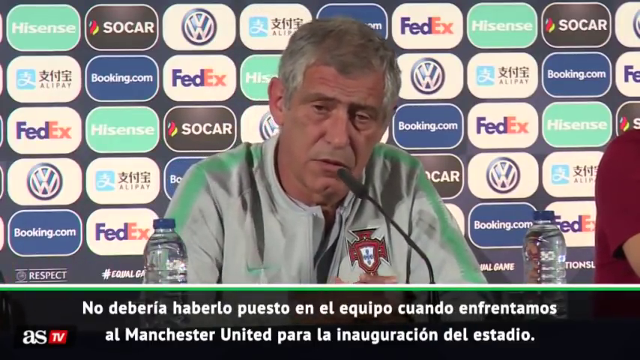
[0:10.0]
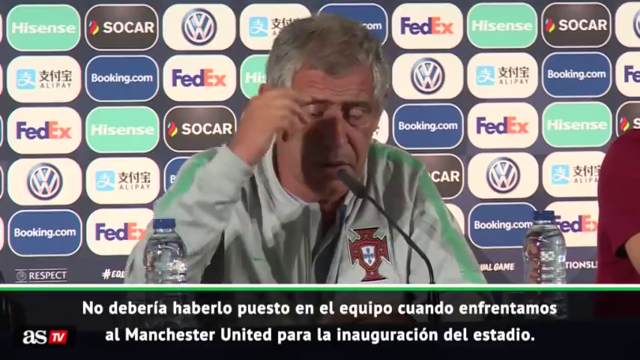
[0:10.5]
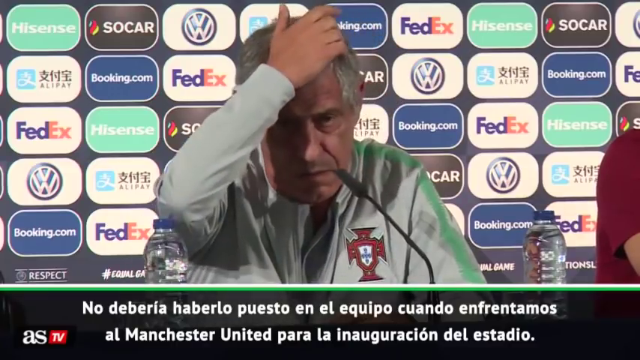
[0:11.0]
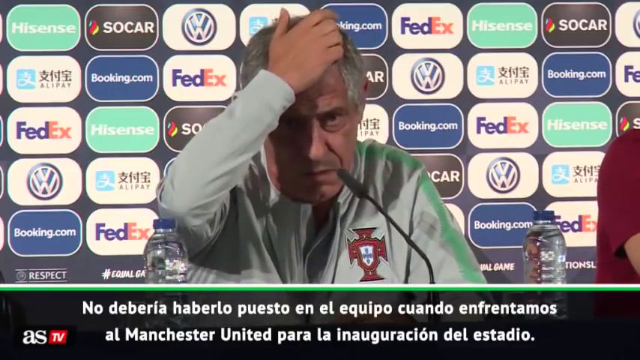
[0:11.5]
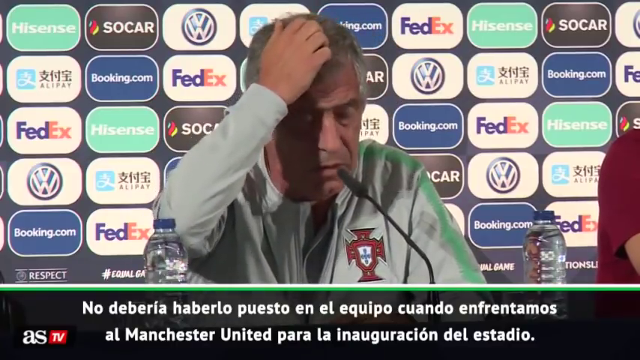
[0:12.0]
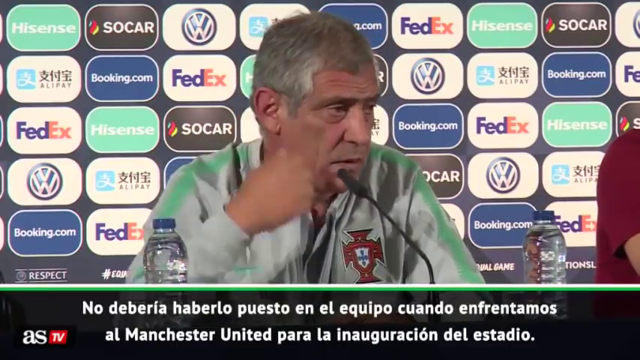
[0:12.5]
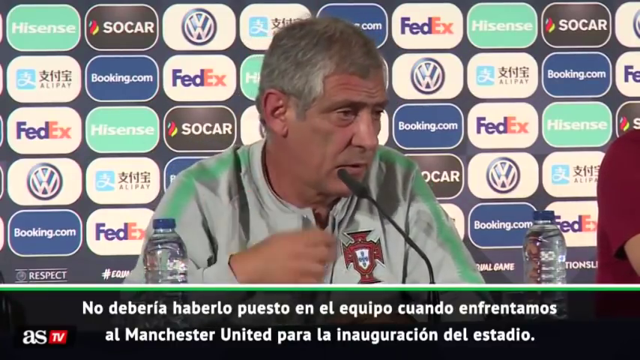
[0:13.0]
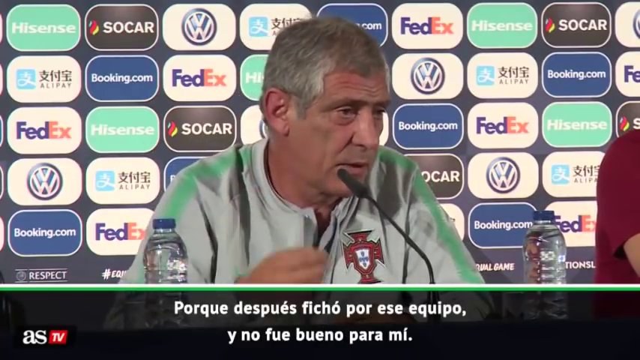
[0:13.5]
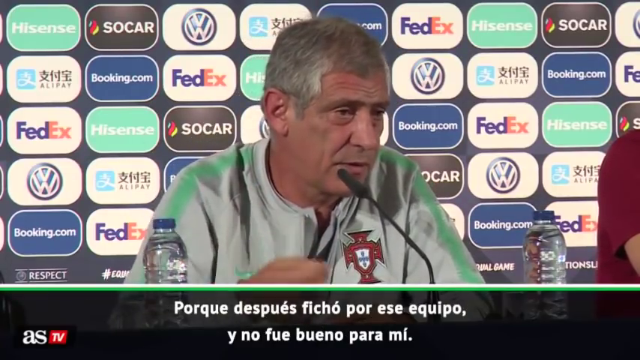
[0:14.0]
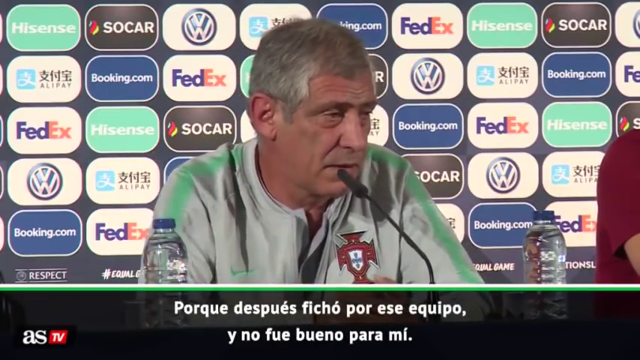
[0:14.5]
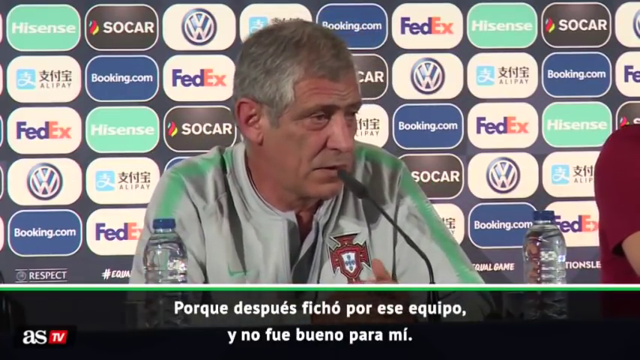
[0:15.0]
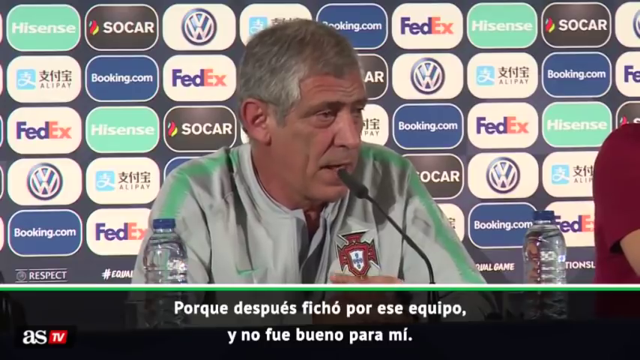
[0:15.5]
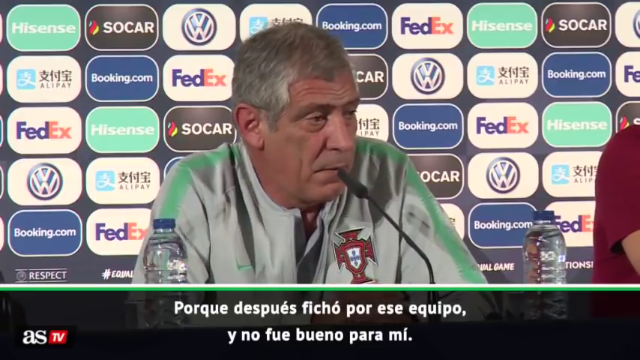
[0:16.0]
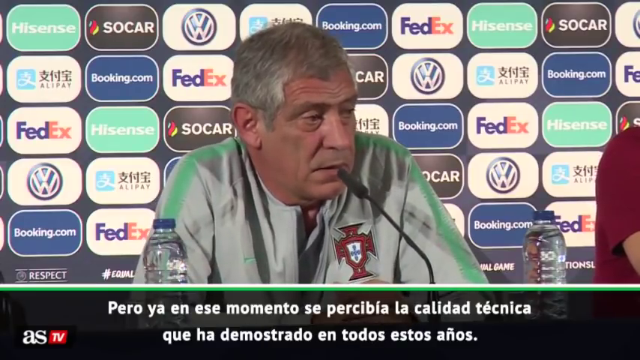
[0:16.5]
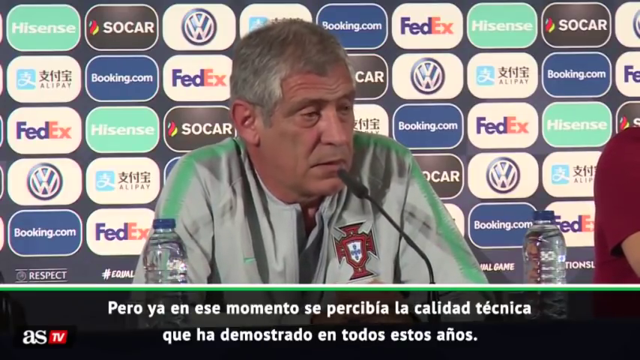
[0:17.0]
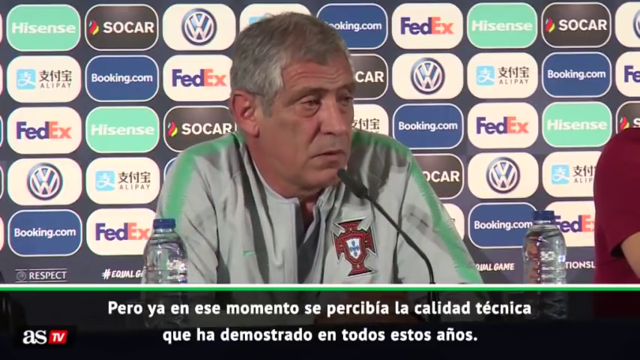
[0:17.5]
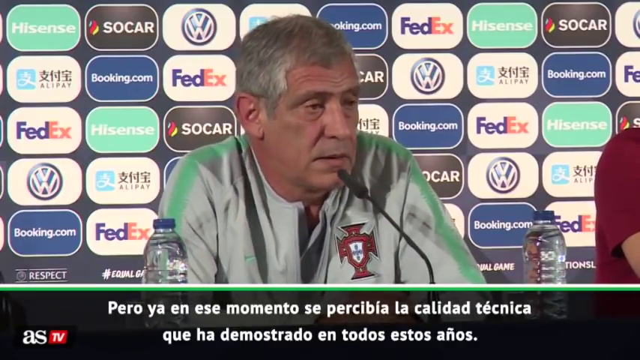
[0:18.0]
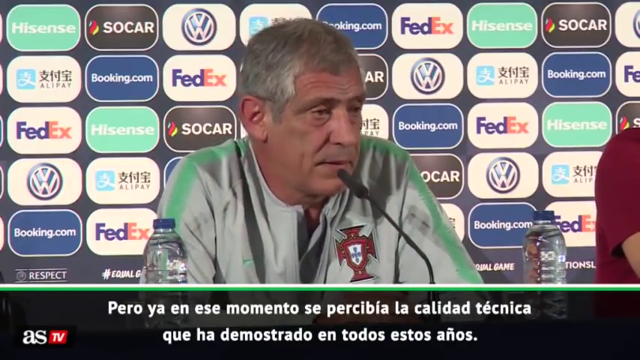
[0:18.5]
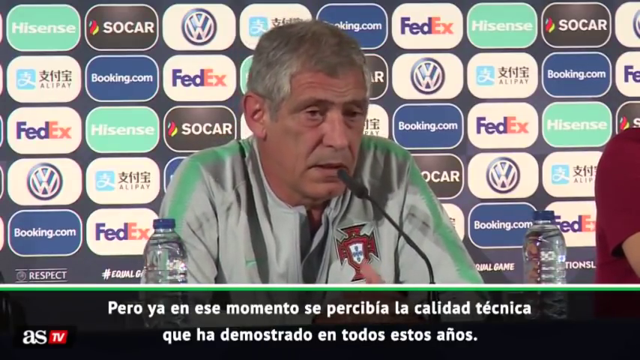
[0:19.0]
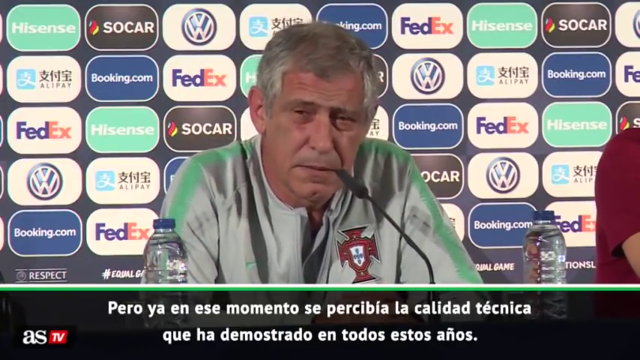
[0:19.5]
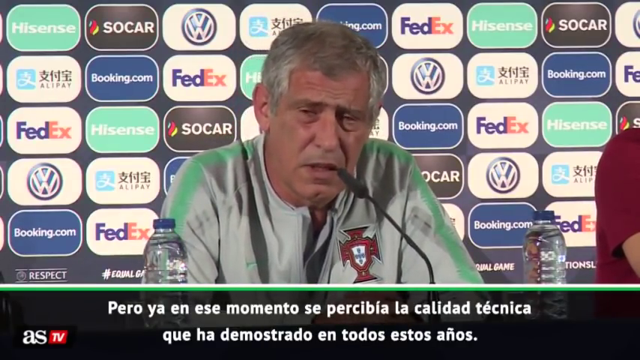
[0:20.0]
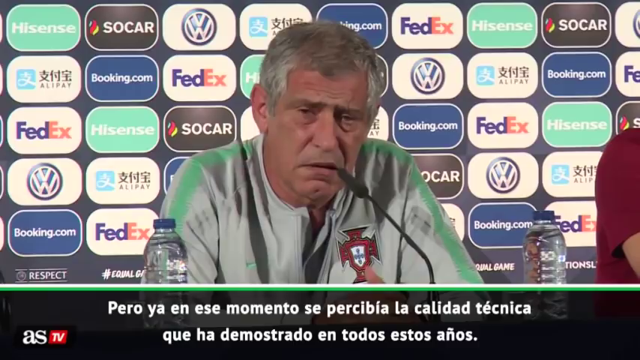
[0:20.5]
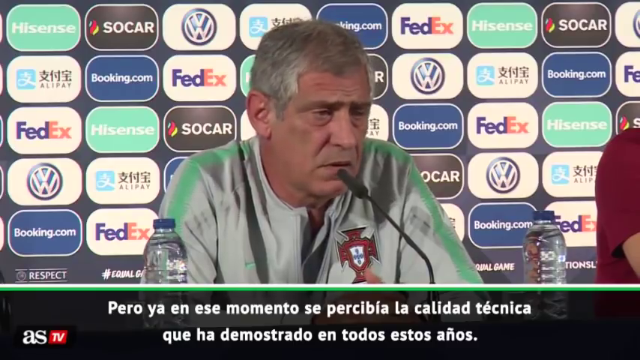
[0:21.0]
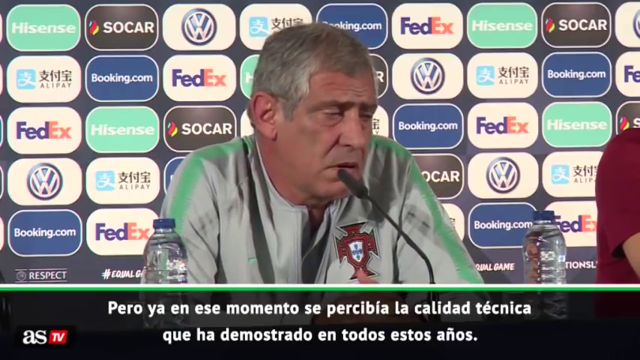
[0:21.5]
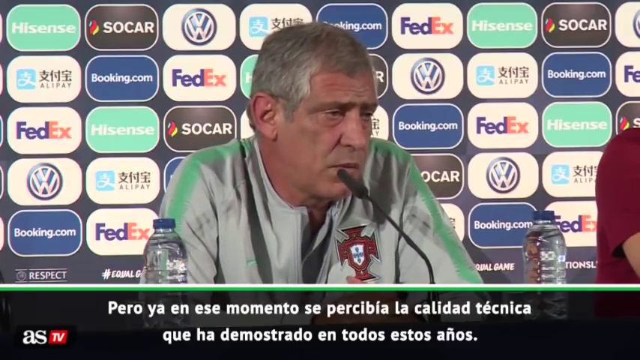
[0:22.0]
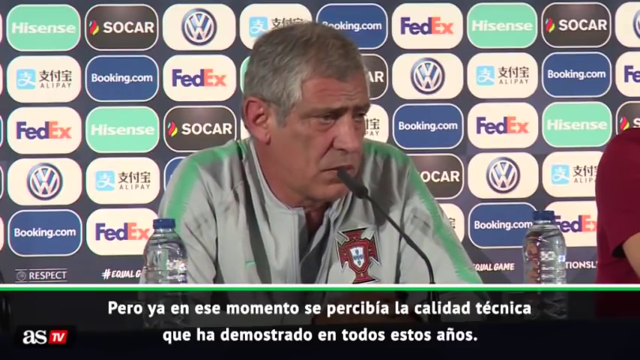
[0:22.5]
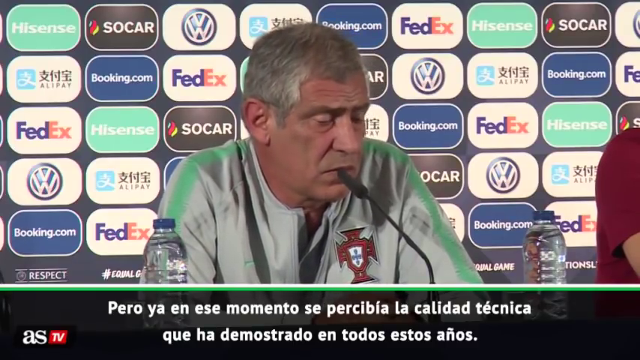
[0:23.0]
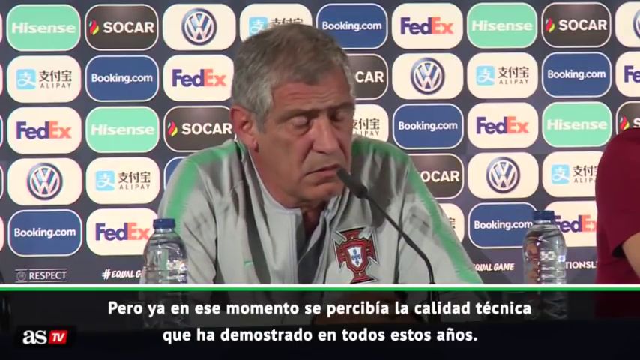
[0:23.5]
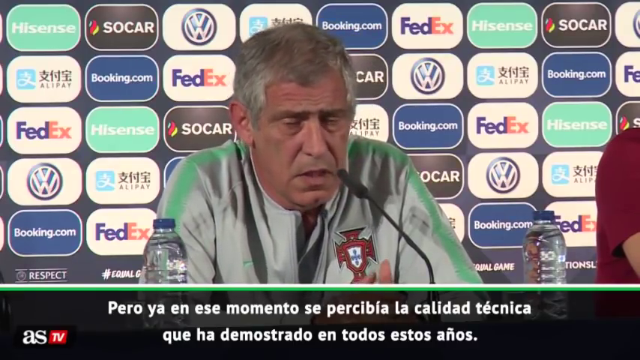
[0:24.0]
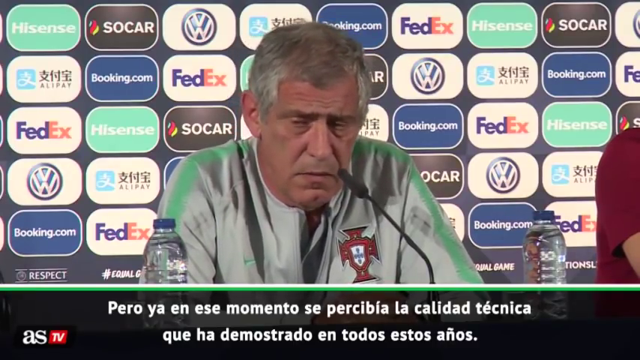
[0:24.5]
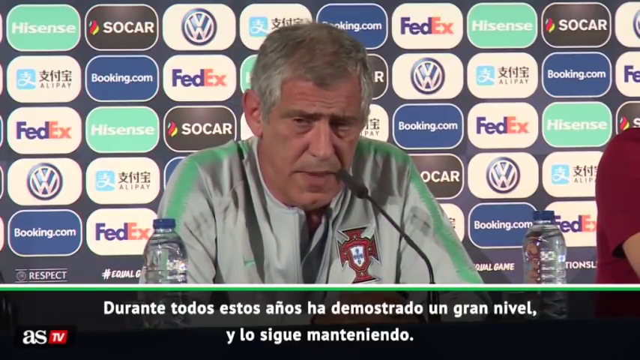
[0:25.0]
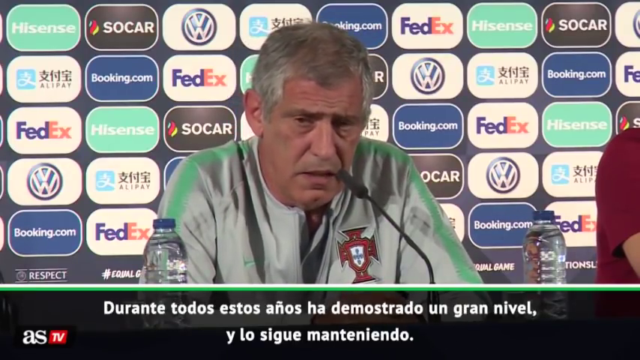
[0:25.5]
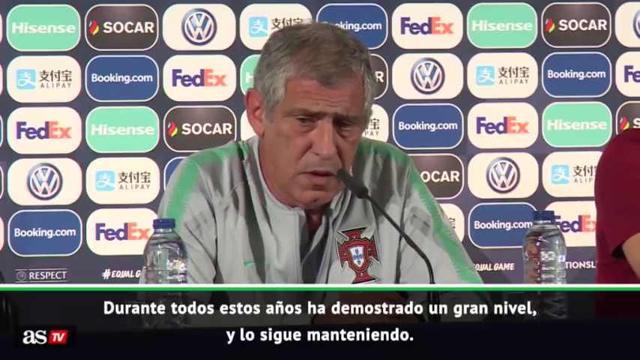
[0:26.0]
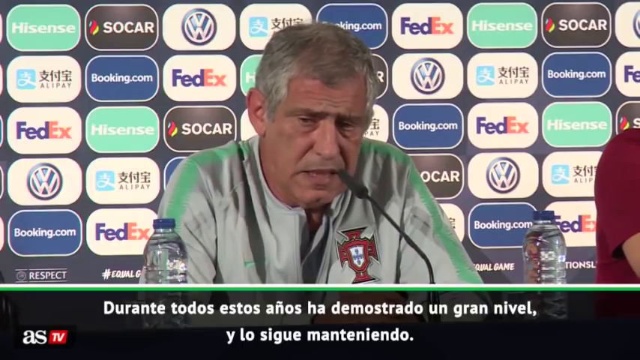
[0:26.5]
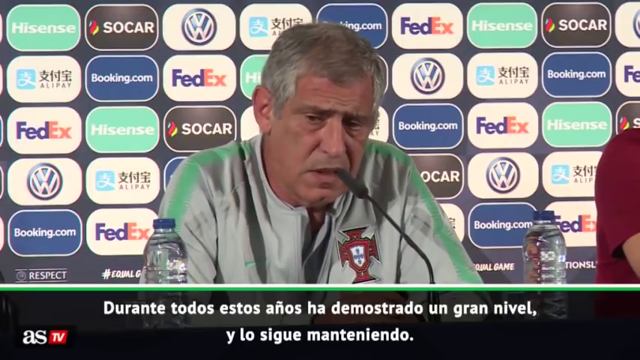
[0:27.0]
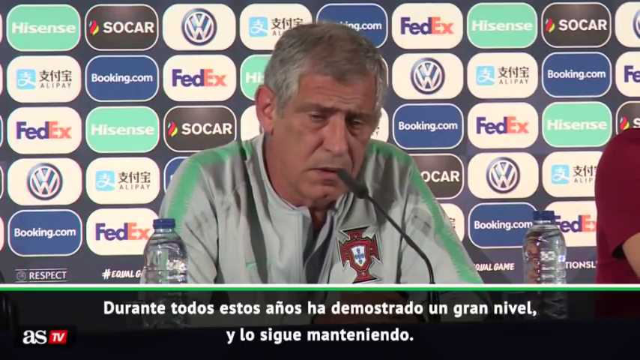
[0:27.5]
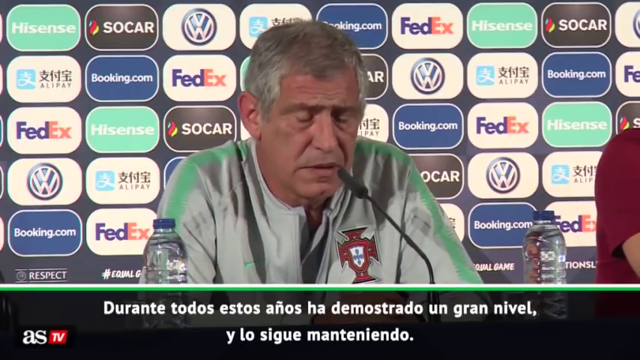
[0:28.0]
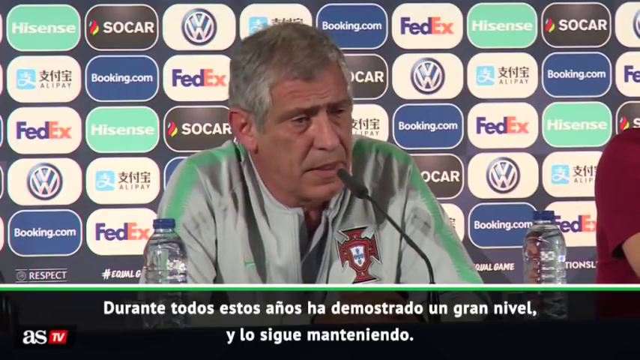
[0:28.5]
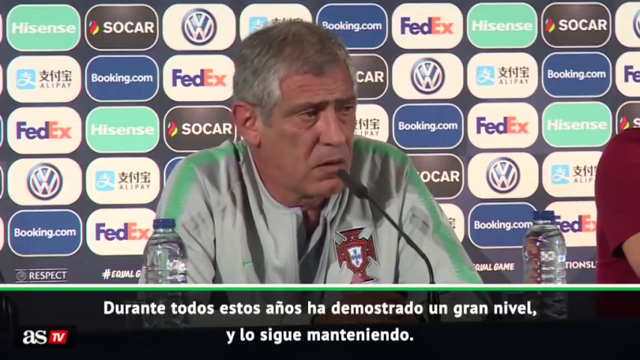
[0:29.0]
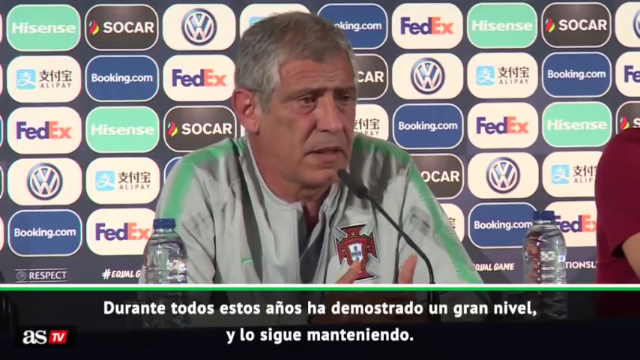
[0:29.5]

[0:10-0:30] The man raises his right arm to scratch his head. He appears to be wearing a gray track jacket with green stripes running from near his lats to his shoulders and arms. On the left side of his chest is a logo that kind of looks like a cross. In the background are rectangles with rounded edges, arranged in about maybe six or seven rows going down and across, each containing what looks like a company: FedEx, Hisense, Socar, a Volkswagen logo, Booking.com and various others. The companies repeat, shown at least three or four times. White text in Spanish runs along the bottom of the screen.